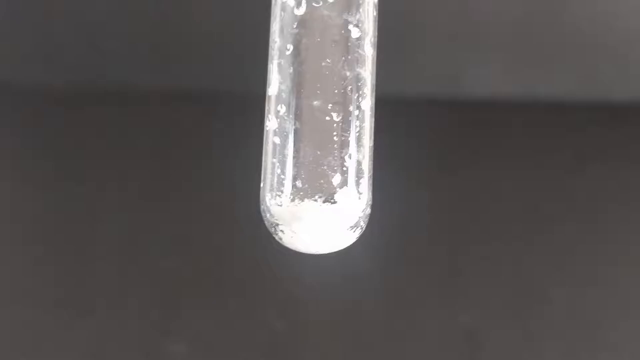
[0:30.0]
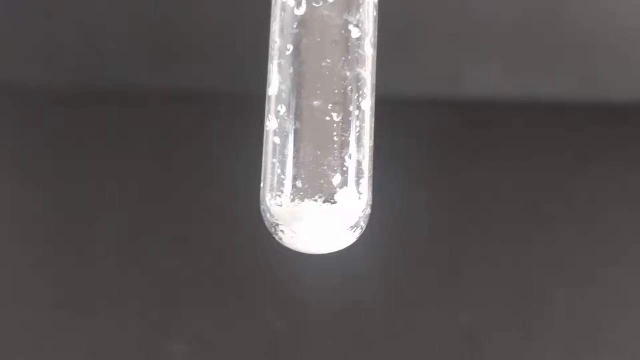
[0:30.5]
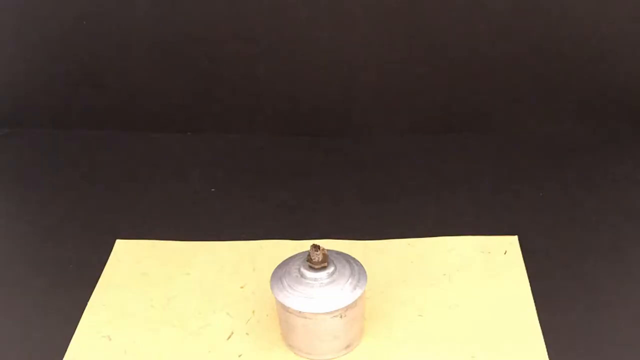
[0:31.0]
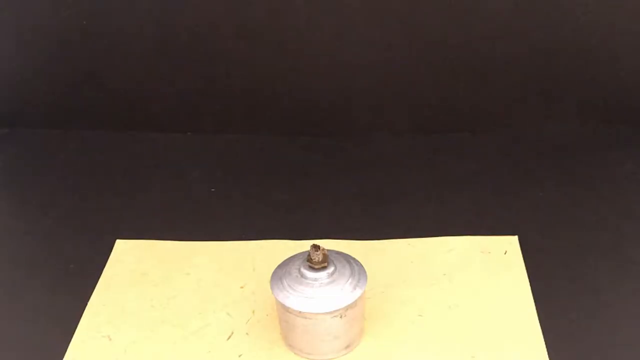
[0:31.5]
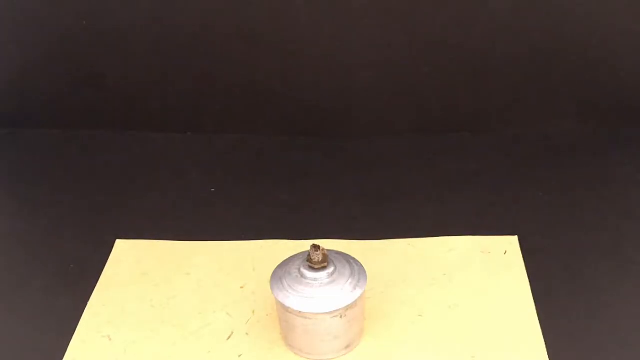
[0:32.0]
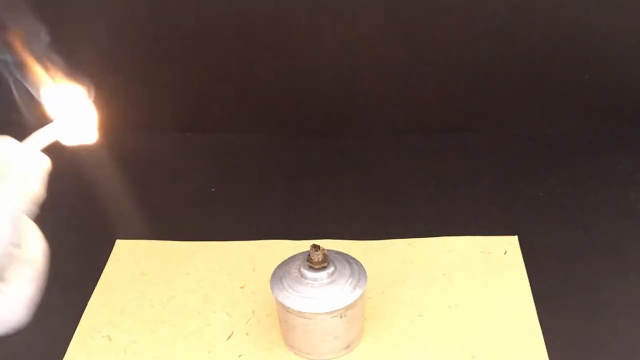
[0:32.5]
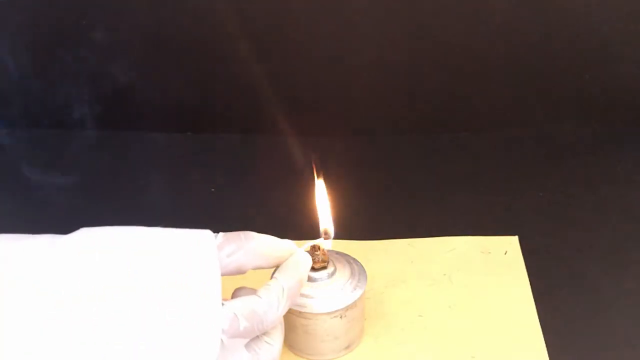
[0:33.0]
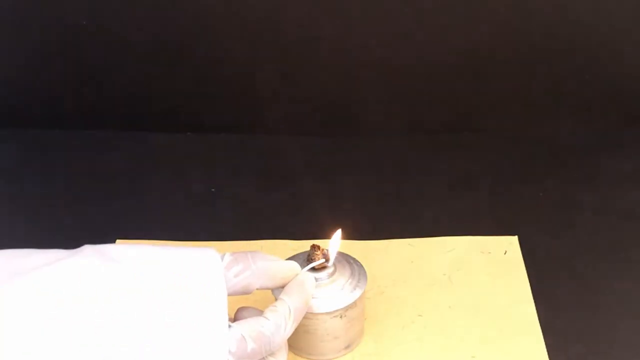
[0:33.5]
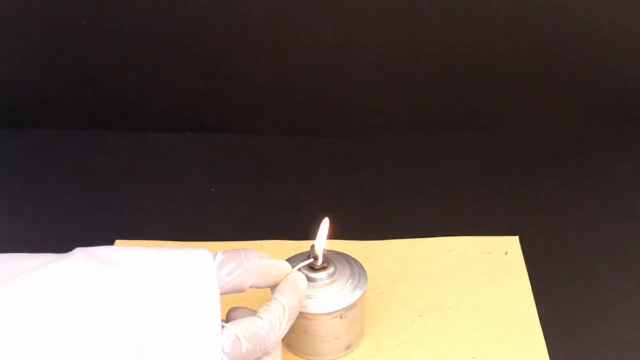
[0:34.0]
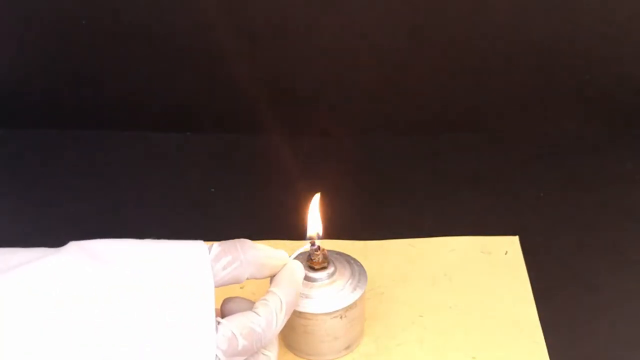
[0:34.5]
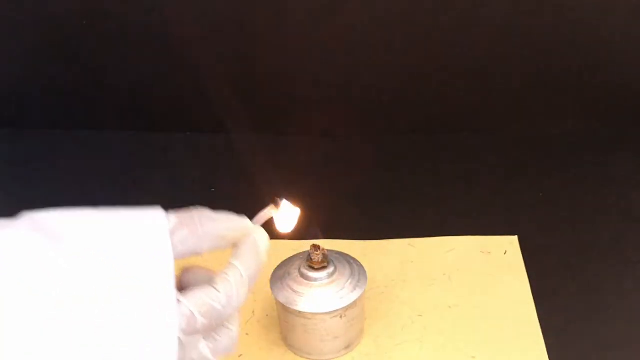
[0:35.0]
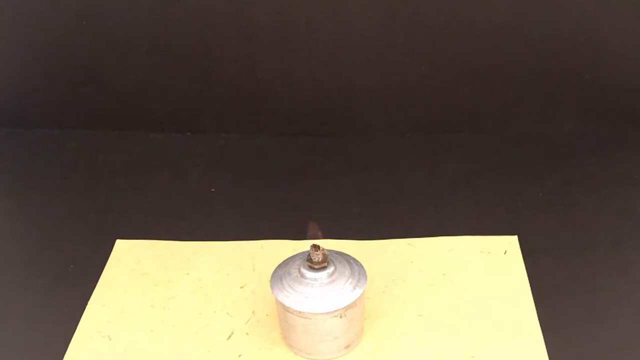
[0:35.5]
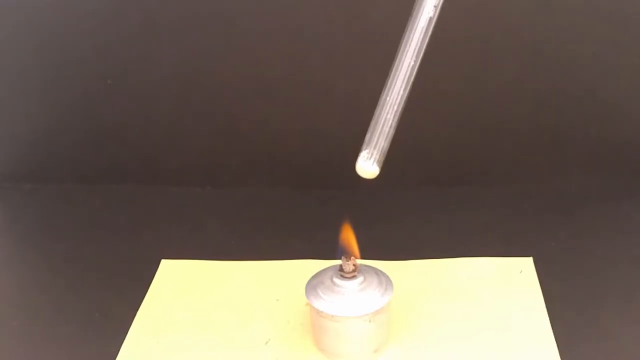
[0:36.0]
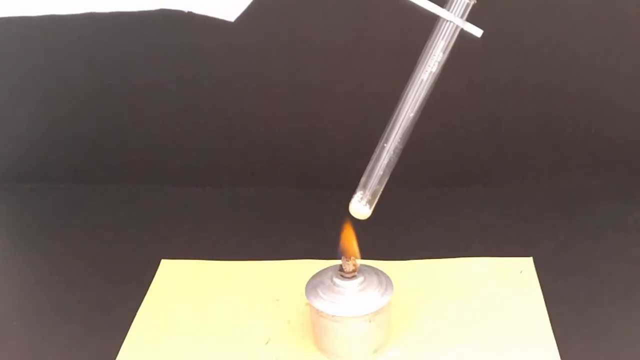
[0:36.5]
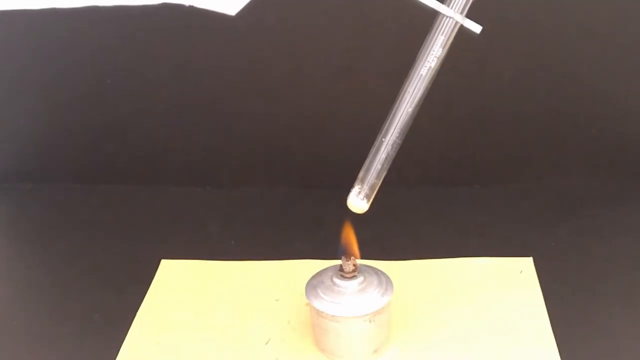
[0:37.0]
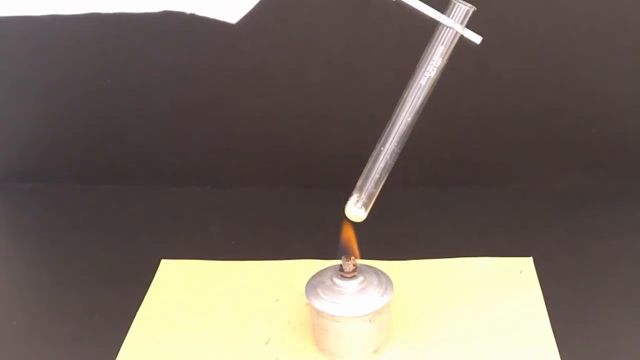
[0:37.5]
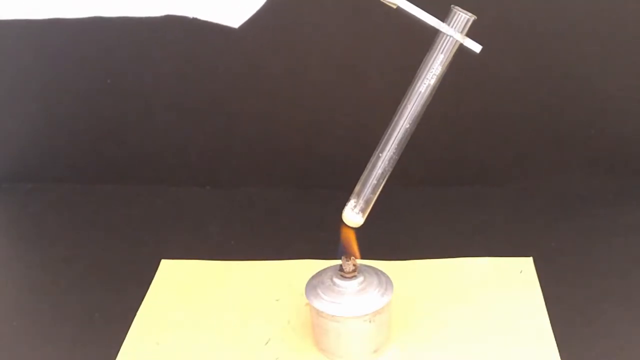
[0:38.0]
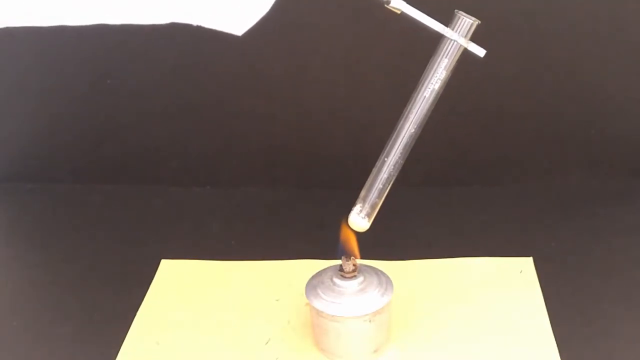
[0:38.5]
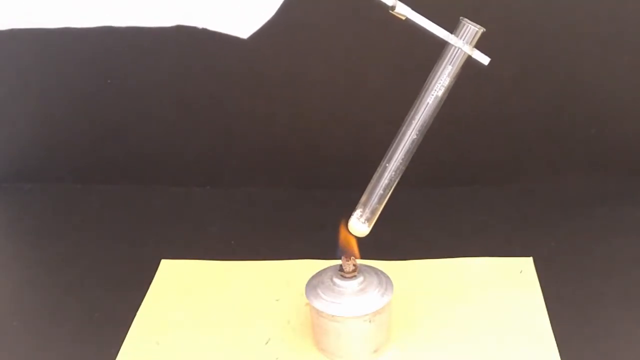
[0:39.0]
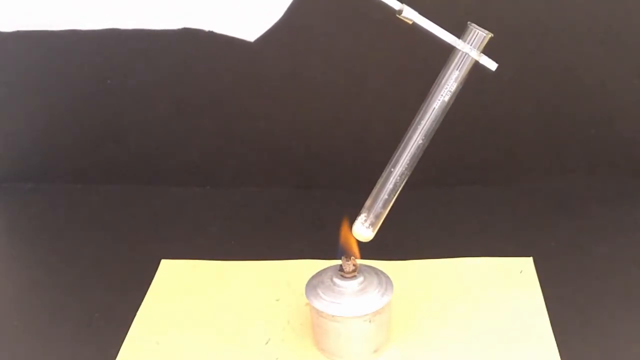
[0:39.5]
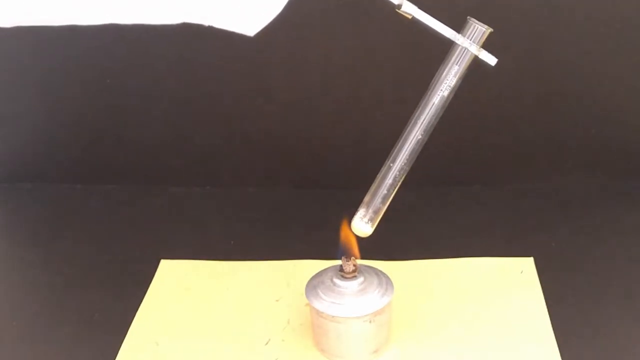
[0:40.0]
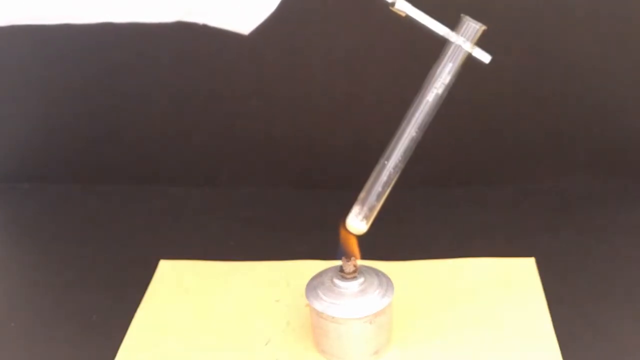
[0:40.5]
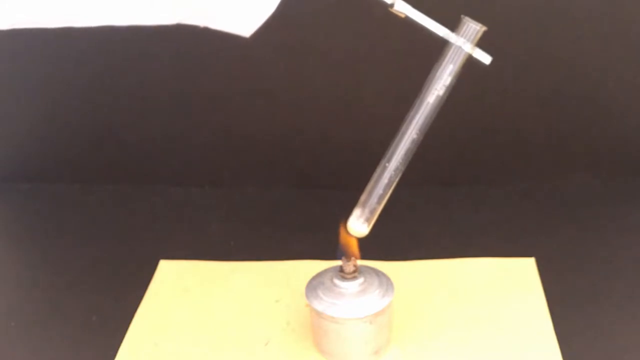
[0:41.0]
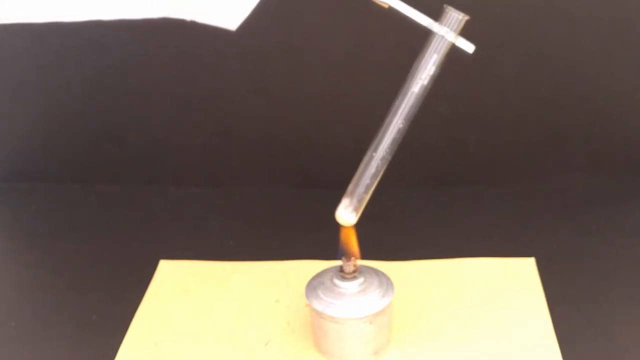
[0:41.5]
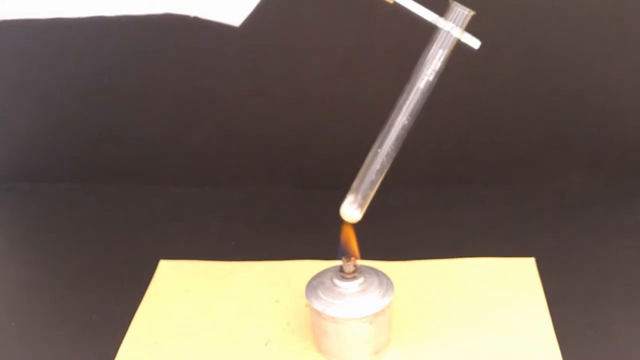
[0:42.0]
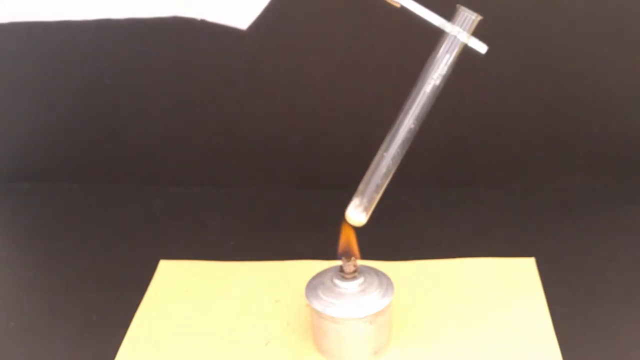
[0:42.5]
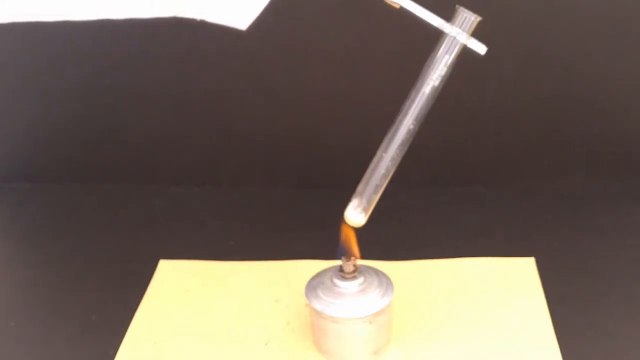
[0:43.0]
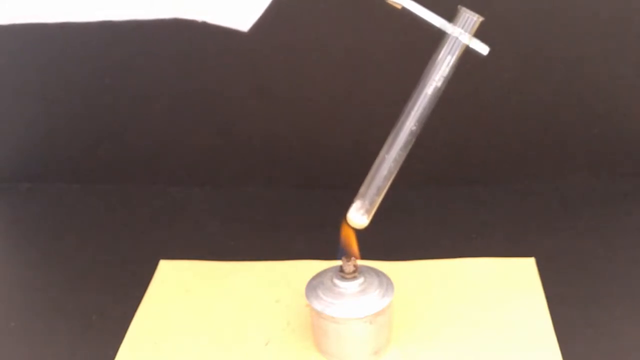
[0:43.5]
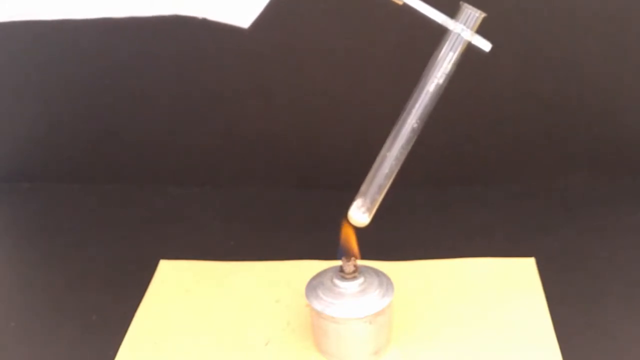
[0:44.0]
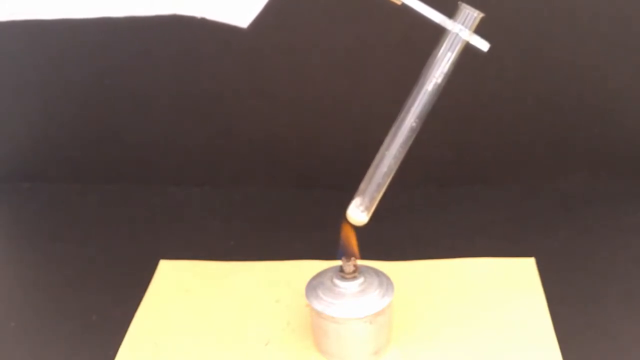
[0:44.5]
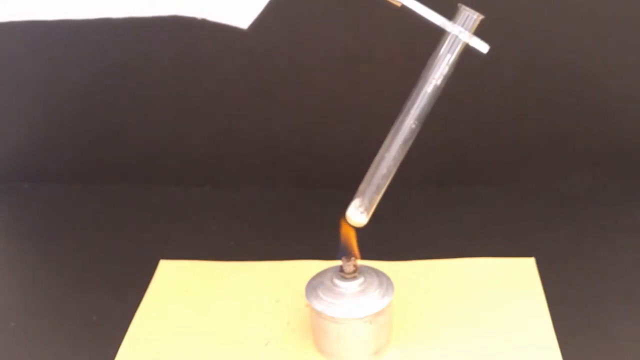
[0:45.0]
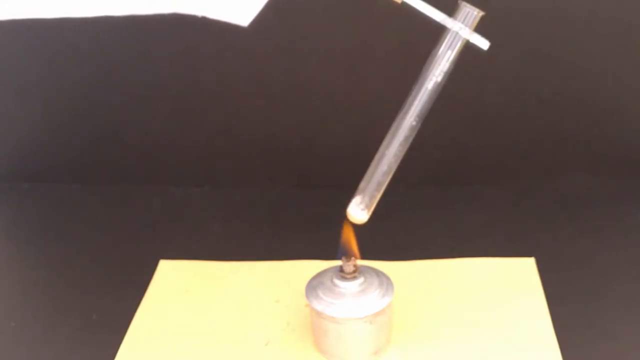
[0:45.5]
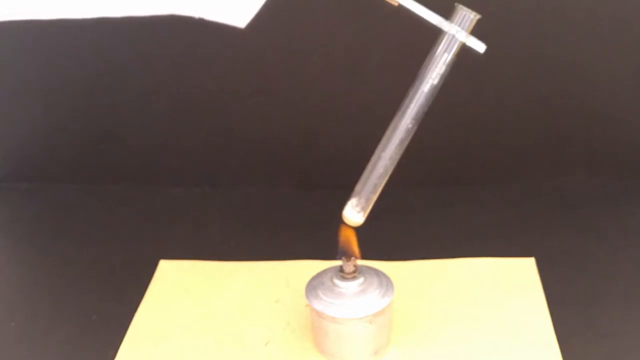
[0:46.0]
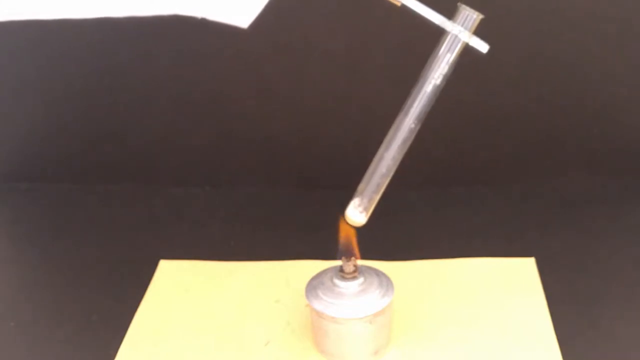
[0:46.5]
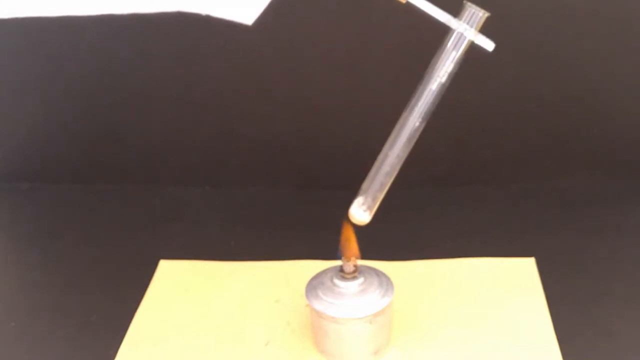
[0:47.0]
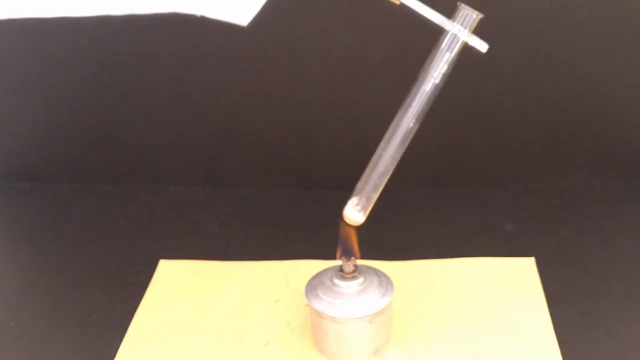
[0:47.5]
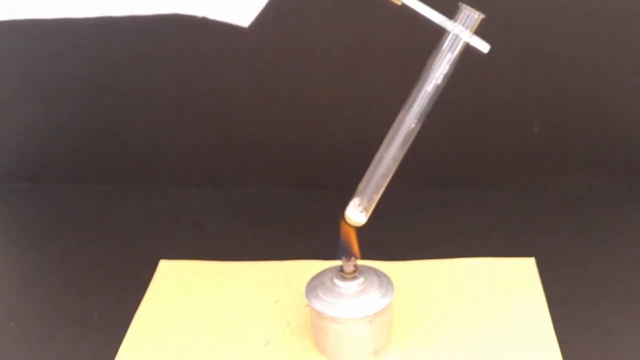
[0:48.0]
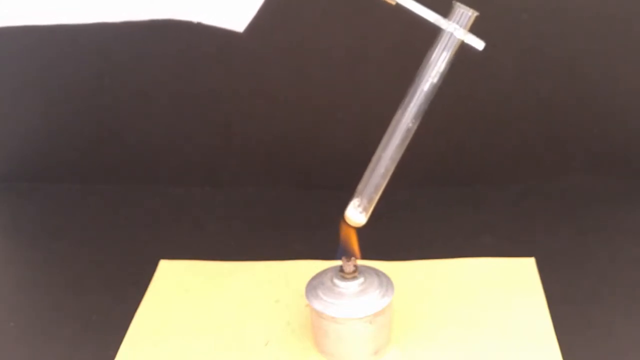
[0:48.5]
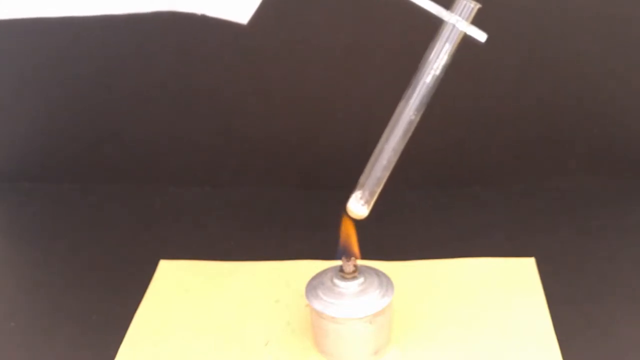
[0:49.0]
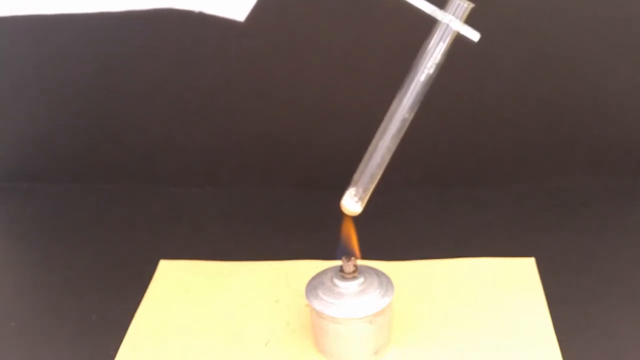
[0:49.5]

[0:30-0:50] The bottom of what appears to be a vial with some kind of white substance in it is shown. Next comes some kind of lamp that runs on fuel, like oil or alcohol, sitting on a yellow rectangular object on a dark-colored table. Someone wearing gloves, with some kind of white lab-coat-looking garment on their arm, holds a match to the lamp. The lamp lights up and a flame comes out of it. Someone then holds a vial or test tube with the white substance in its bottom over the flame for a few moments, using some kind of white-looking tong device. The bottom of their lab coat or white sleeve is visible in the top left corner of the screen.